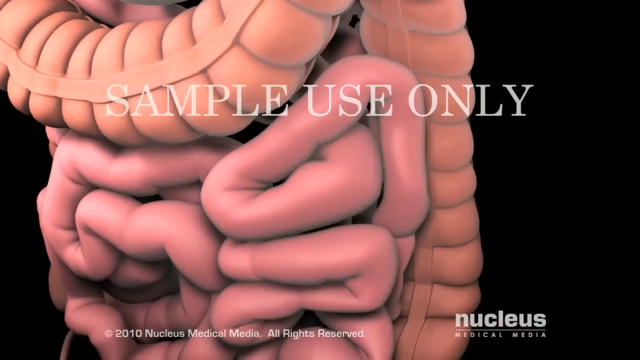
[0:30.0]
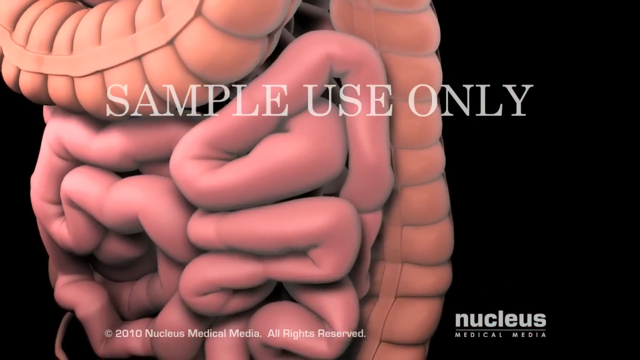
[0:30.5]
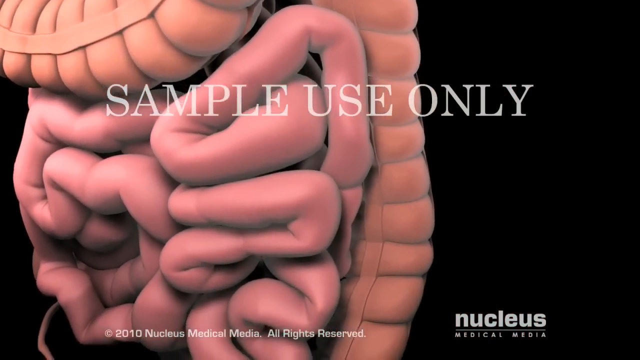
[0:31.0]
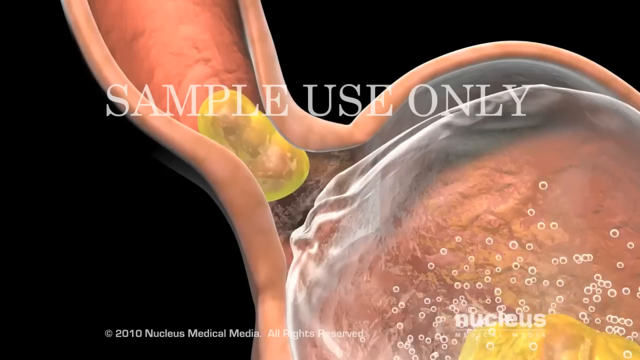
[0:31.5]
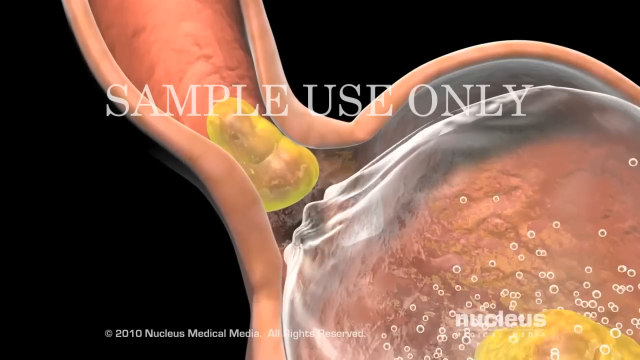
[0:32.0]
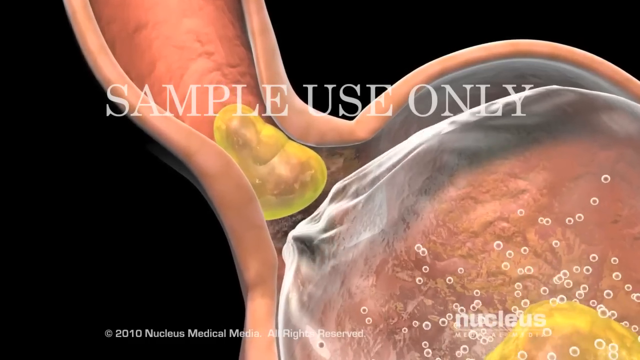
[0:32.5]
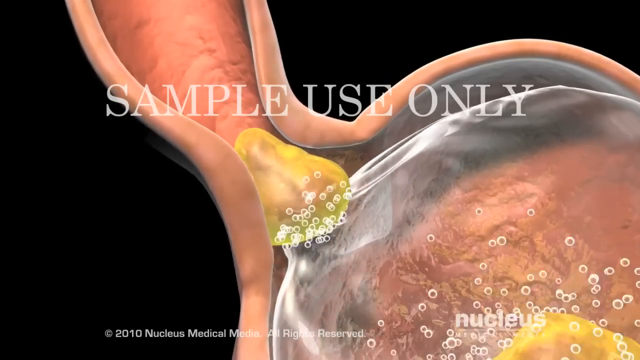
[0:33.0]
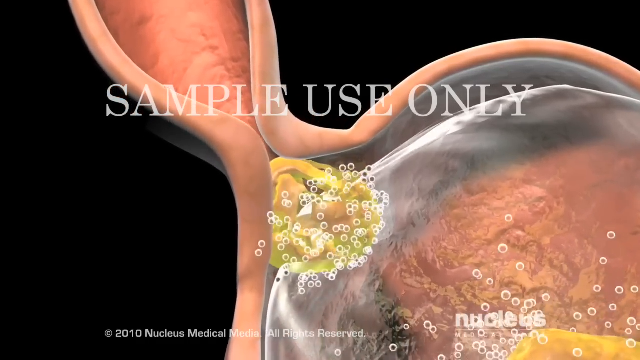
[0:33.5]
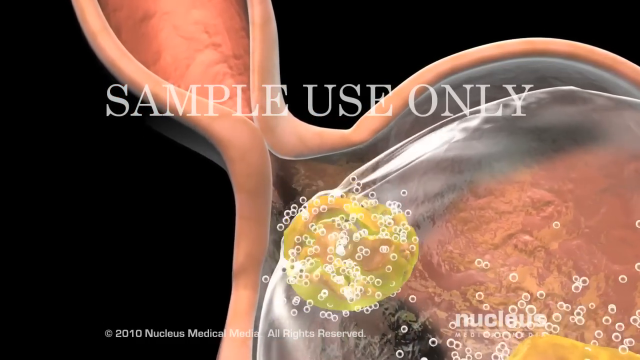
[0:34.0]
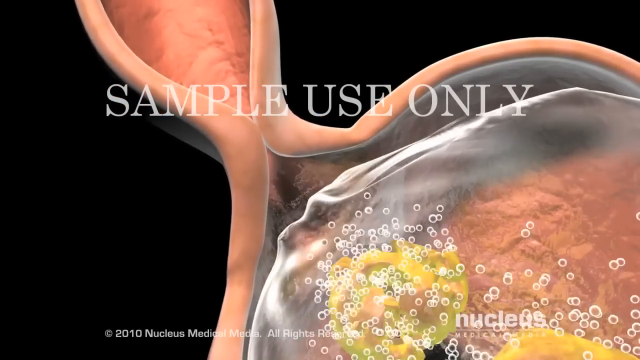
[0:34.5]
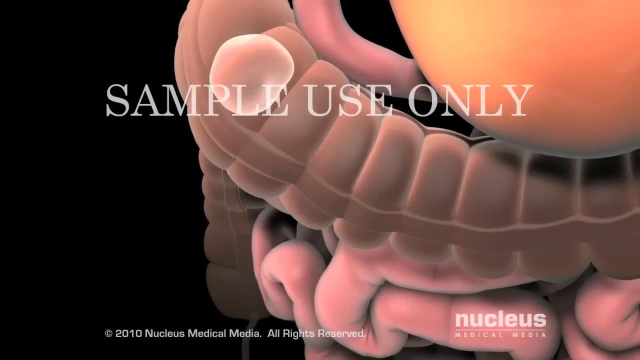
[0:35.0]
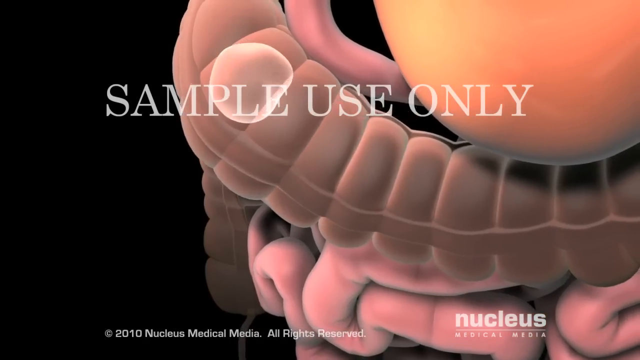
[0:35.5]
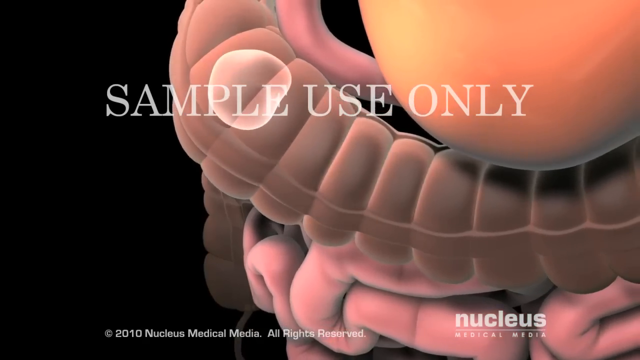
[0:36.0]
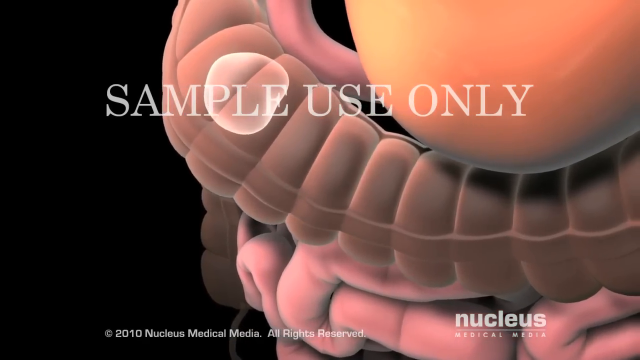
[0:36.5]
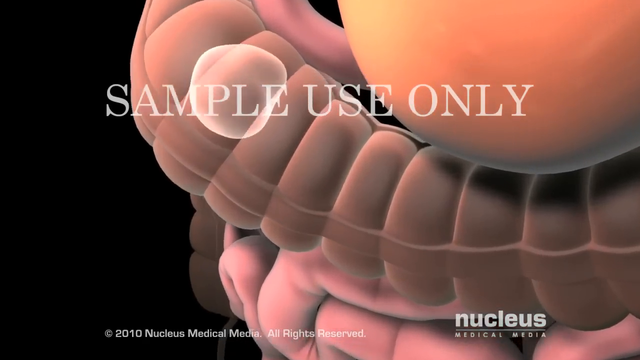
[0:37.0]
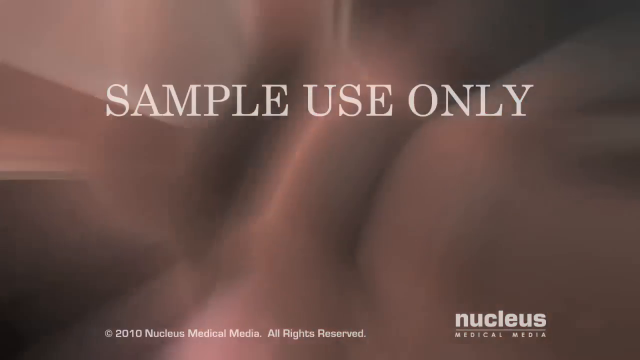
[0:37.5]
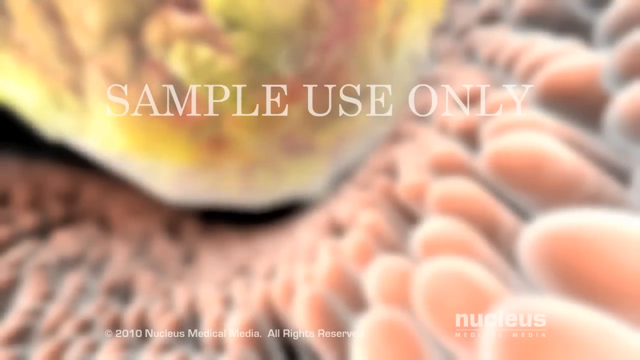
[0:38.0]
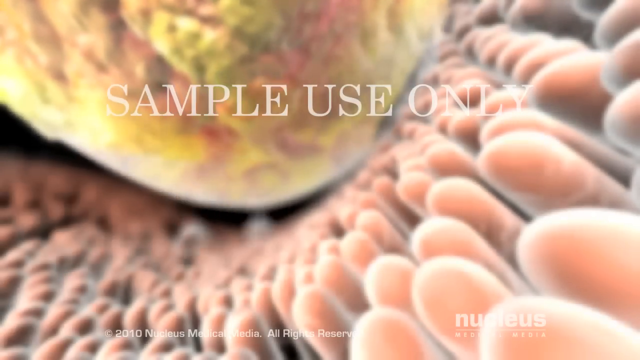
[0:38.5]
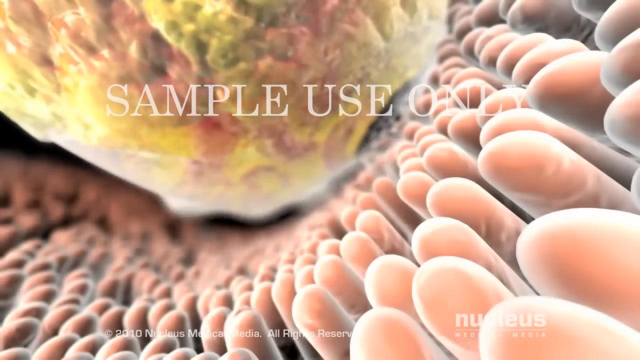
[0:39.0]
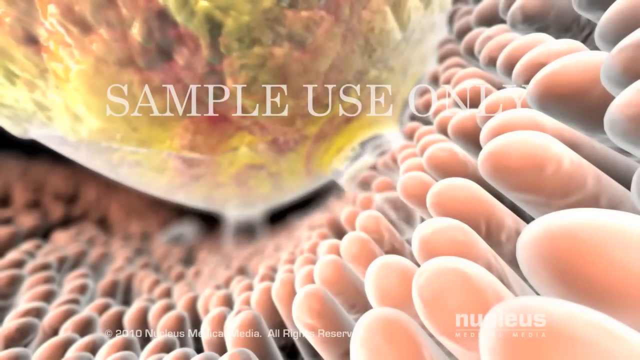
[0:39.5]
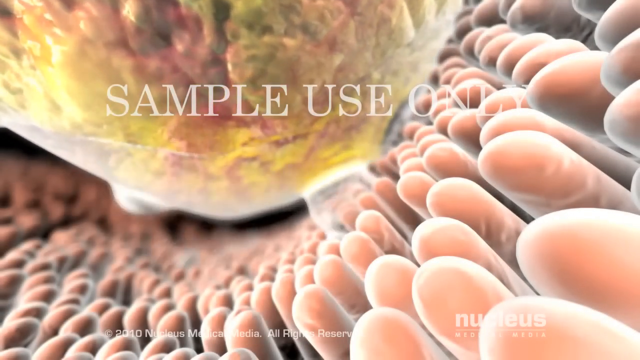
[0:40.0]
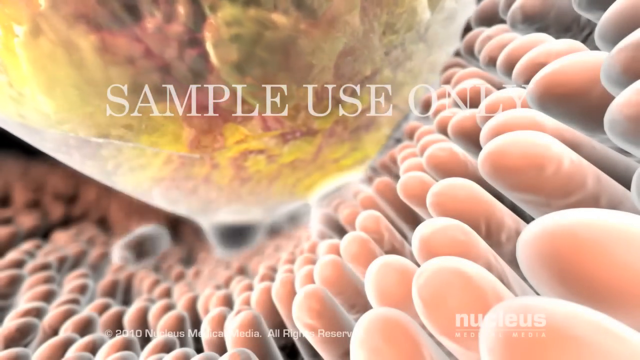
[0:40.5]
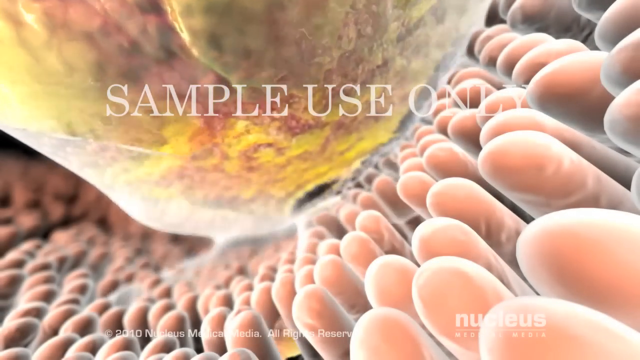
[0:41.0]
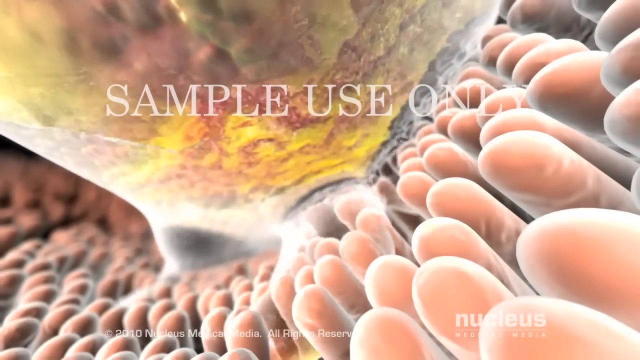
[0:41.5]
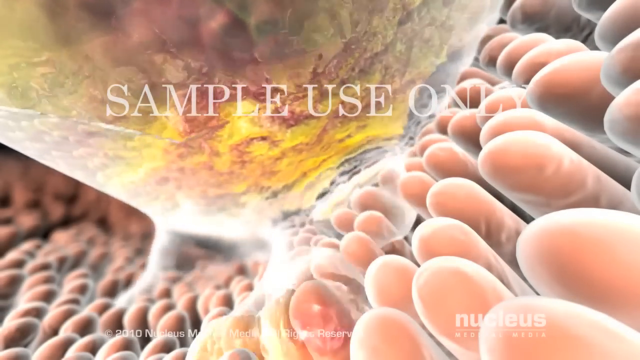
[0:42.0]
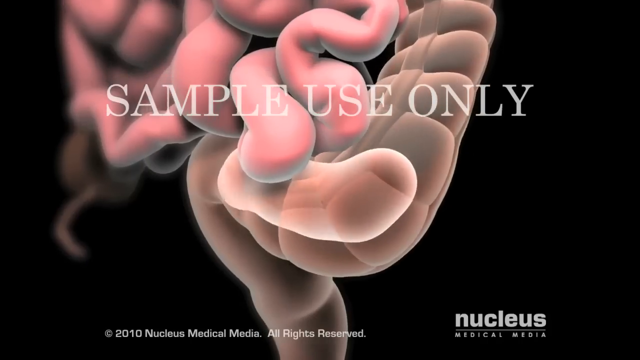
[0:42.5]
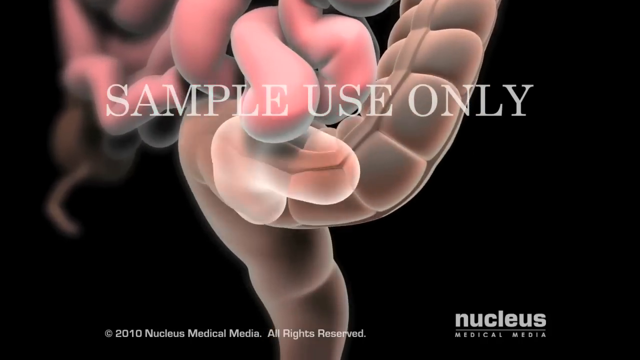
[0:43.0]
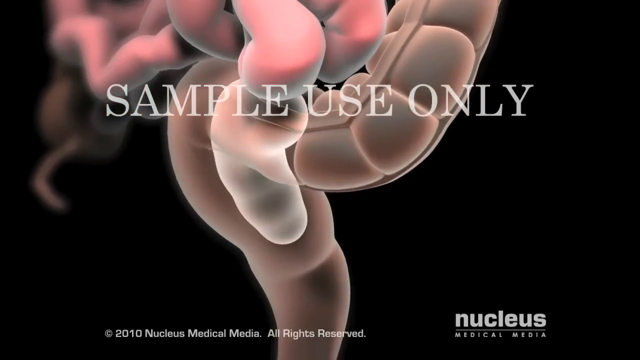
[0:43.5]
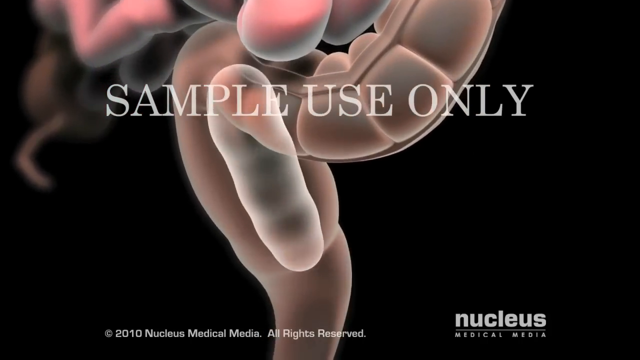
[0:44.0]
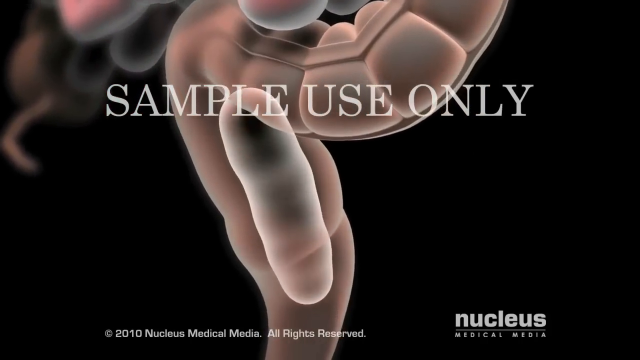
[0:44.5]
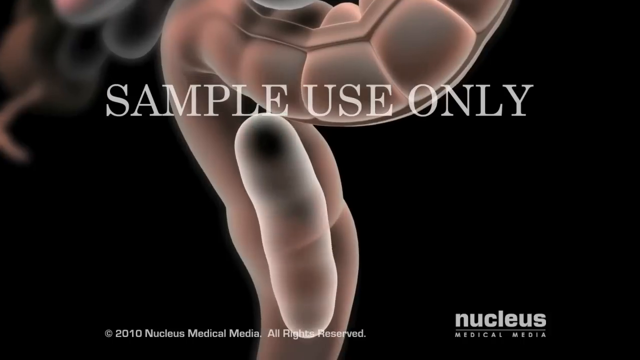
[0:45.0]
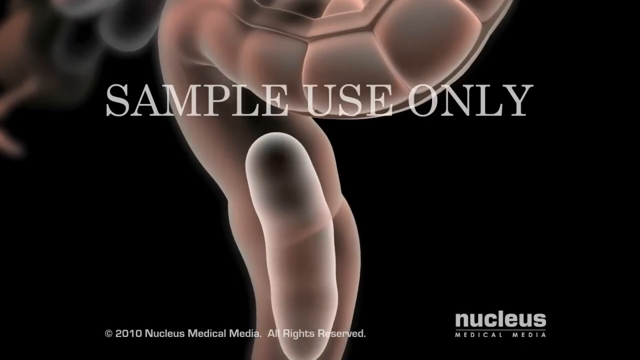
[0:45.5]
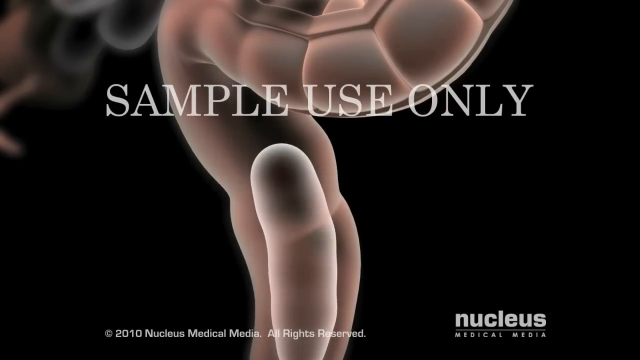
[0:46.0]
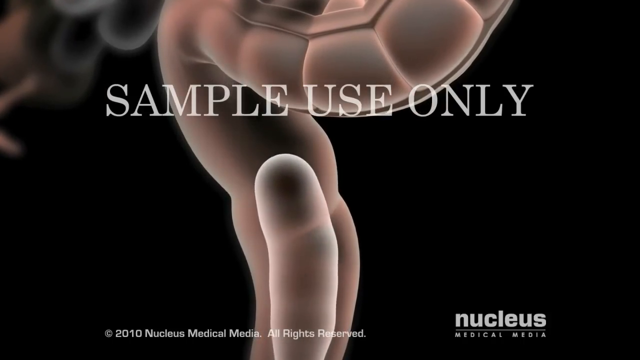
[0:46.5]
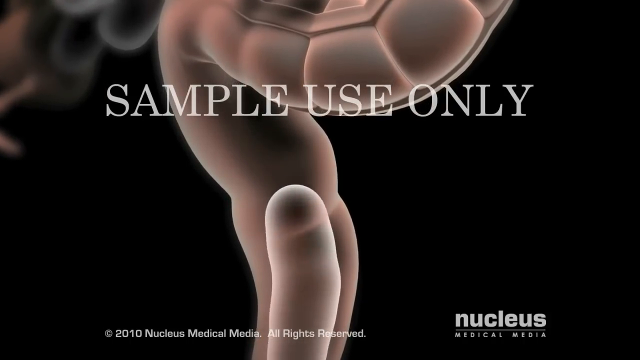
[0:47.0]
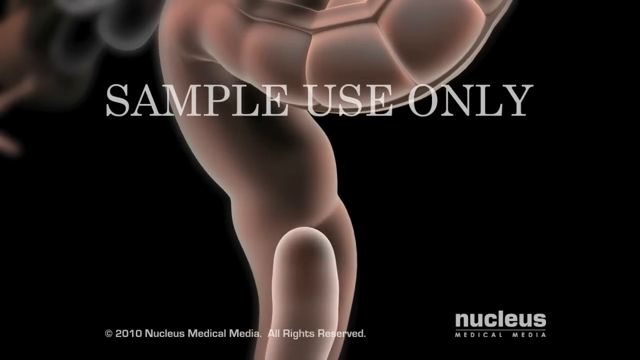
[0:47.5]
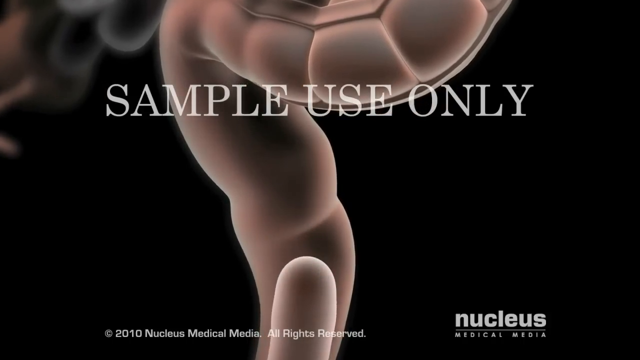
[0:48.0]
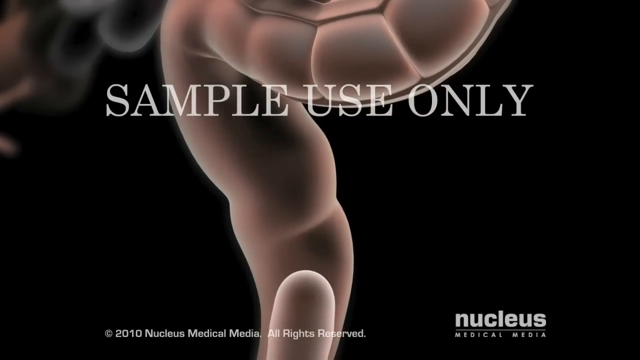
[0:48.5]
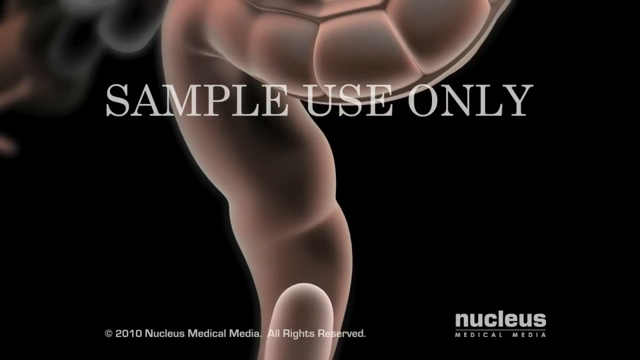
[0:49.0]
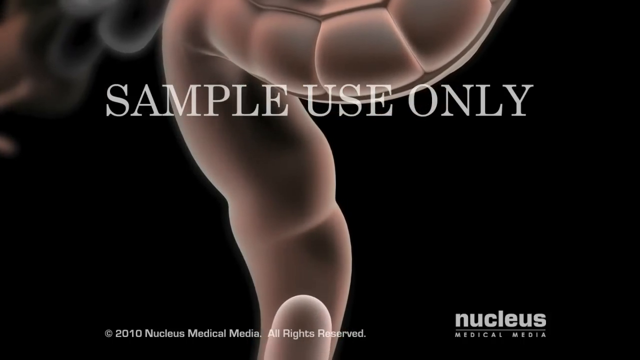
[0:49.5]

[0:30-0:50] "Sample use only" appears in big capital letters across the screen. The view is up close on a model of a colon and a small intestine, which looks like it was formed on a computer. Many colors differentiate the small intestine from the large intestine. A capsule-like piece of food enters the organ, tunnels and winds its way down through the intestine, and starts to go out the bottom of the intestine.